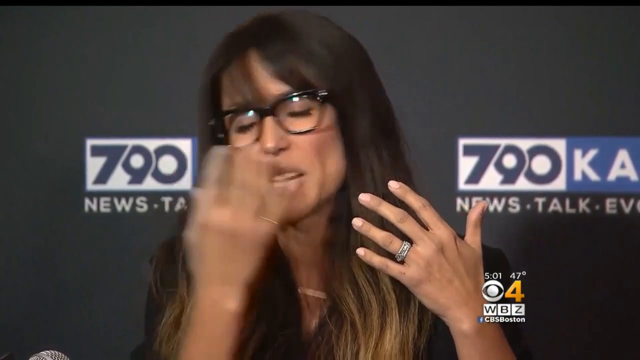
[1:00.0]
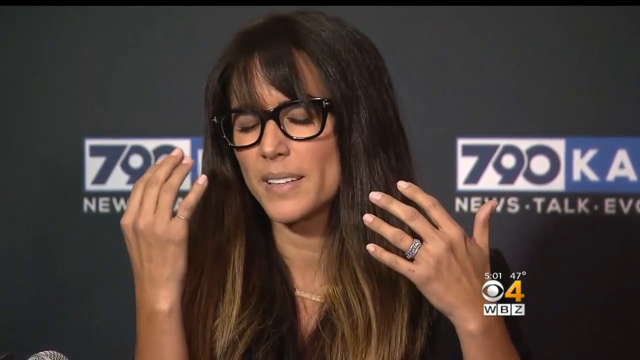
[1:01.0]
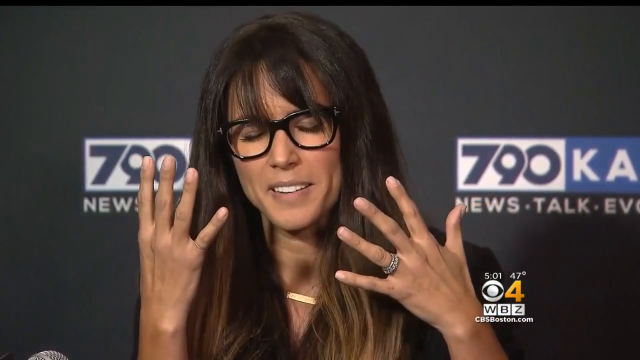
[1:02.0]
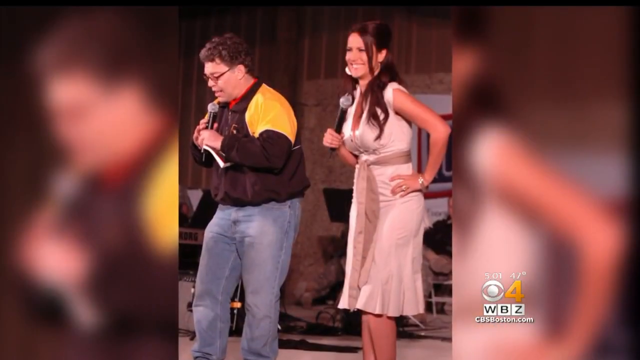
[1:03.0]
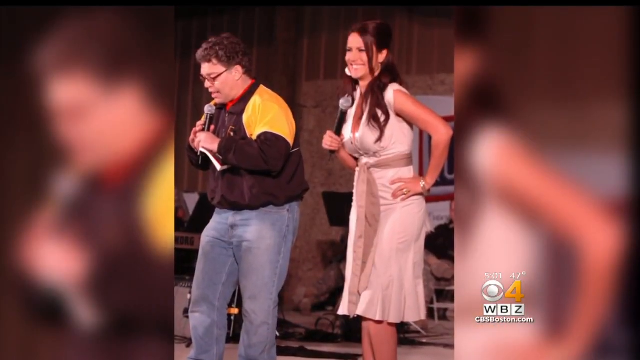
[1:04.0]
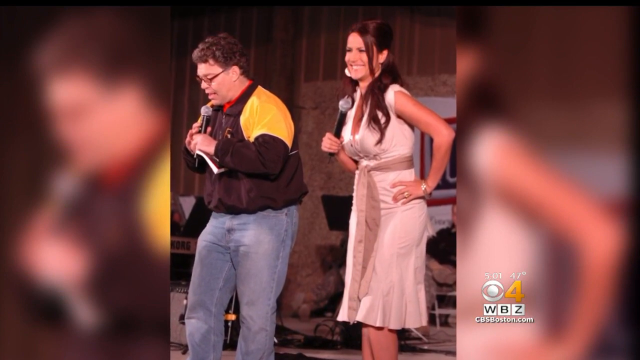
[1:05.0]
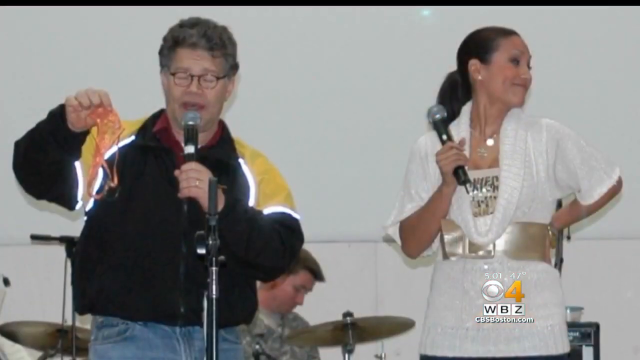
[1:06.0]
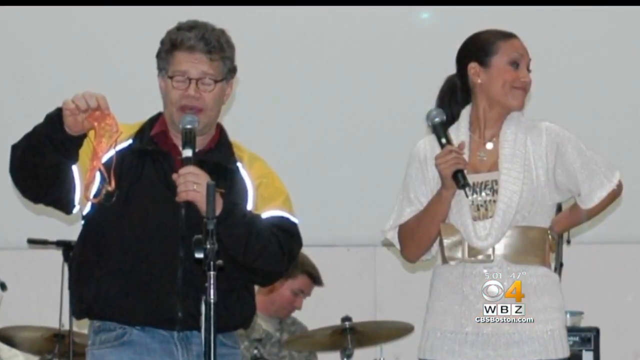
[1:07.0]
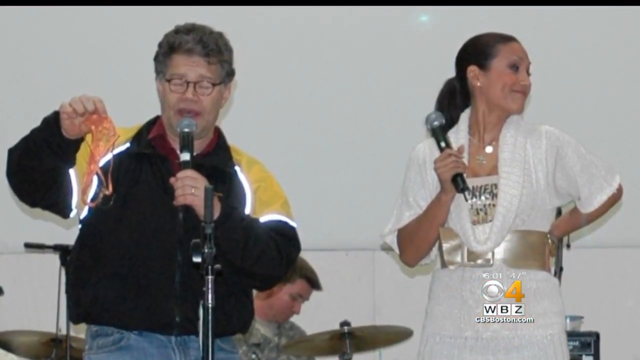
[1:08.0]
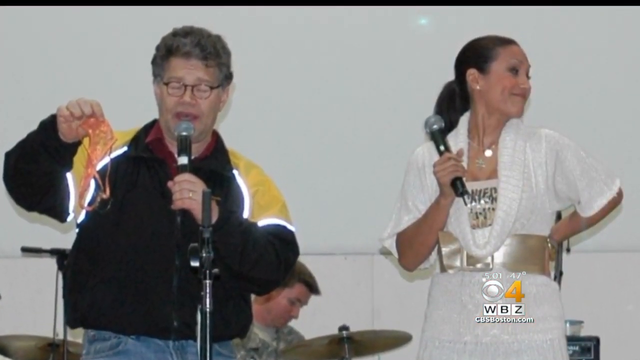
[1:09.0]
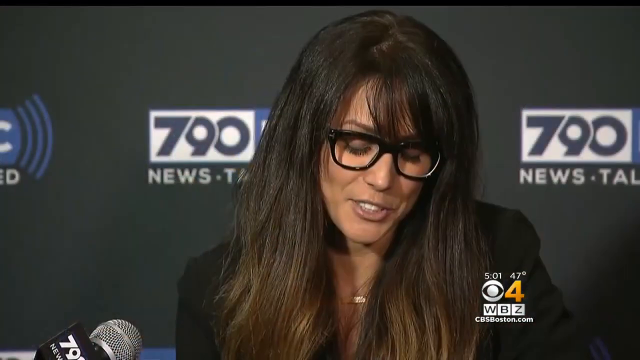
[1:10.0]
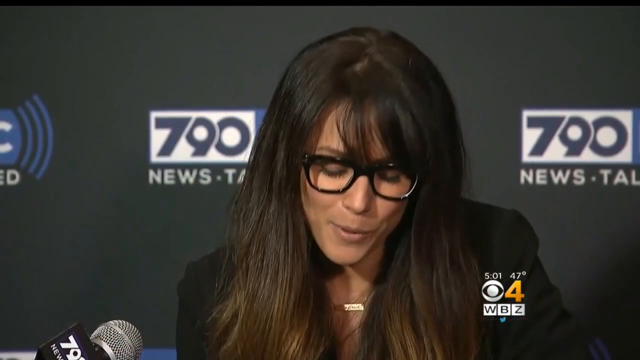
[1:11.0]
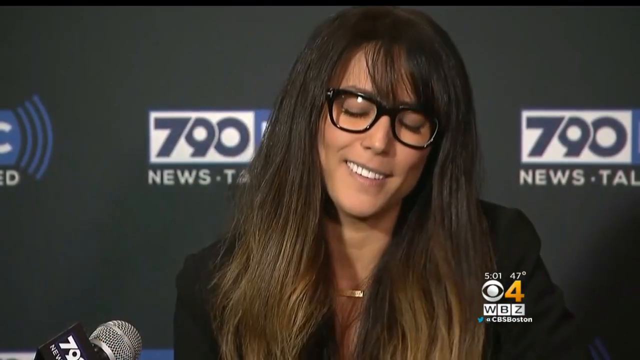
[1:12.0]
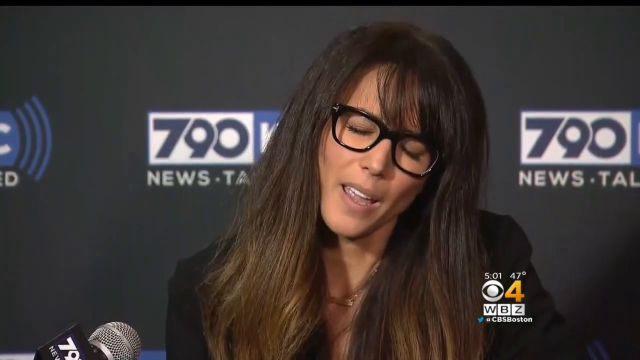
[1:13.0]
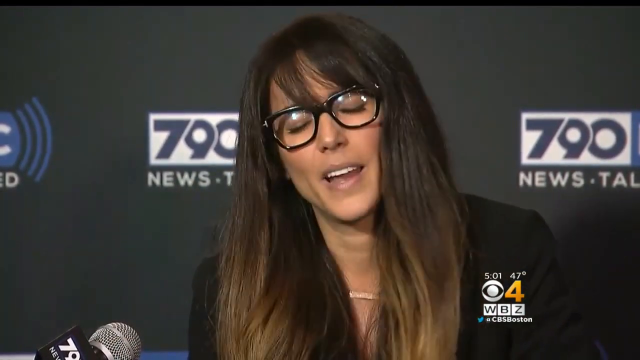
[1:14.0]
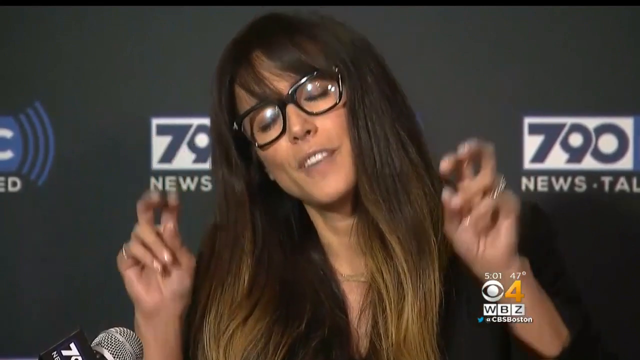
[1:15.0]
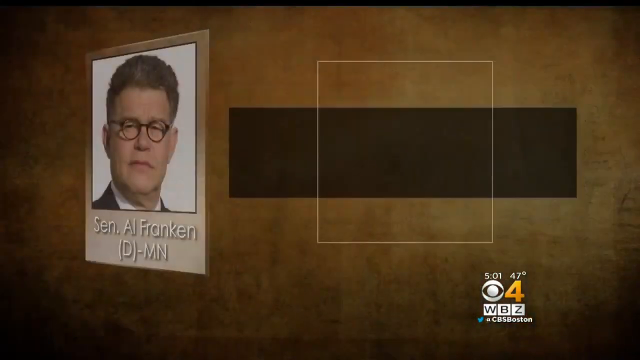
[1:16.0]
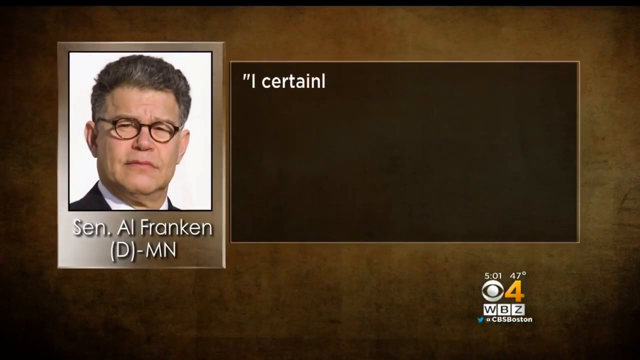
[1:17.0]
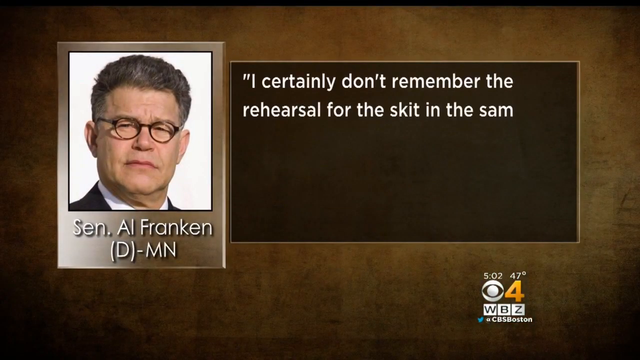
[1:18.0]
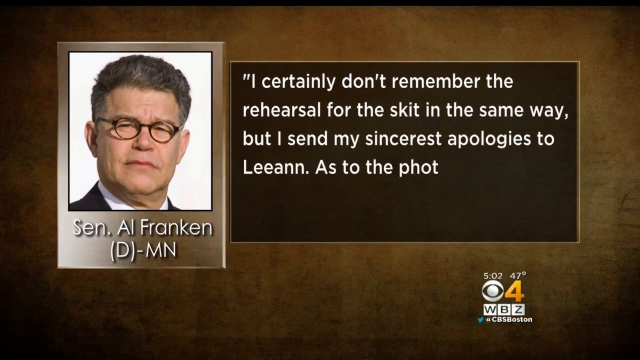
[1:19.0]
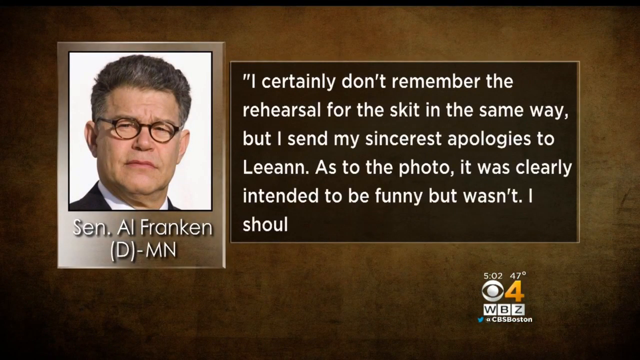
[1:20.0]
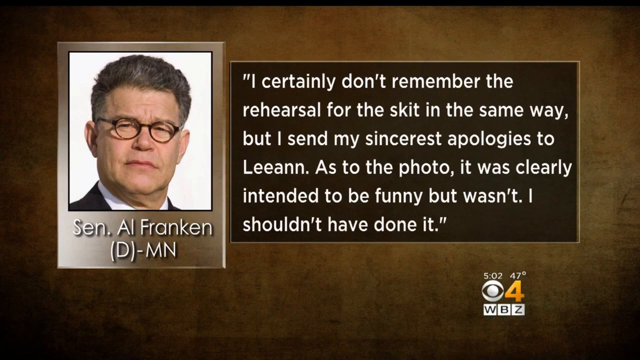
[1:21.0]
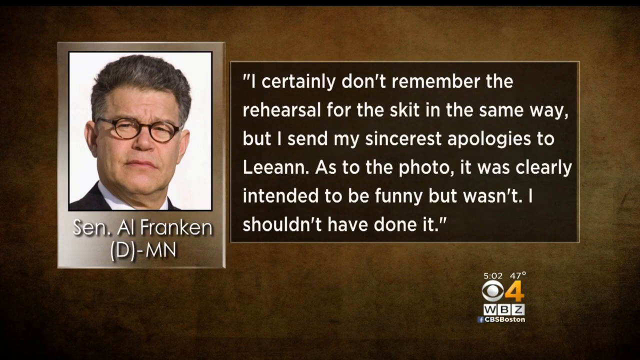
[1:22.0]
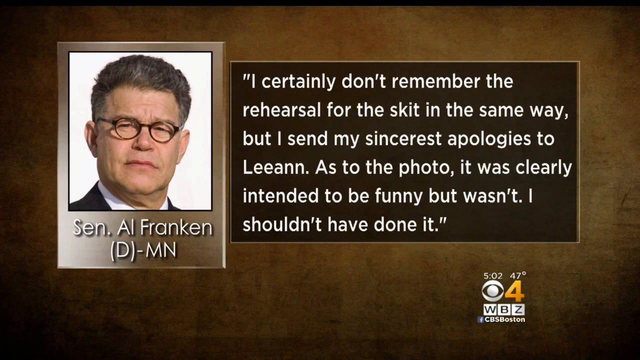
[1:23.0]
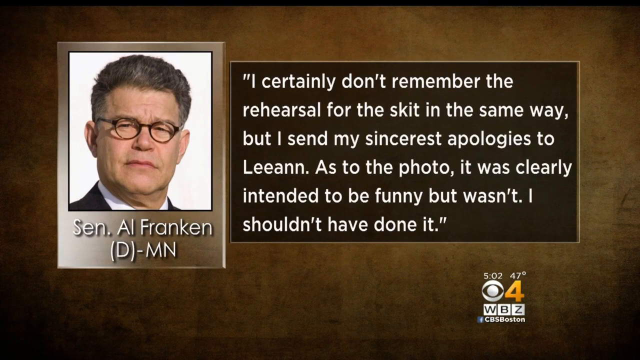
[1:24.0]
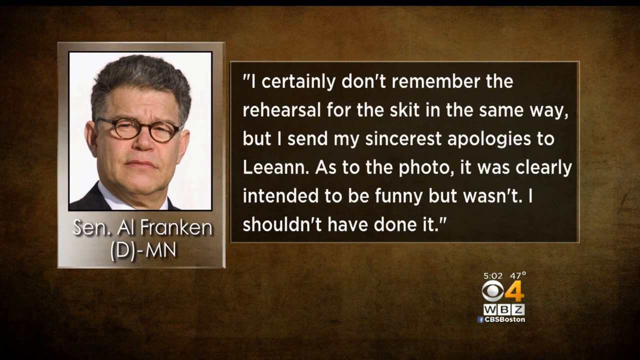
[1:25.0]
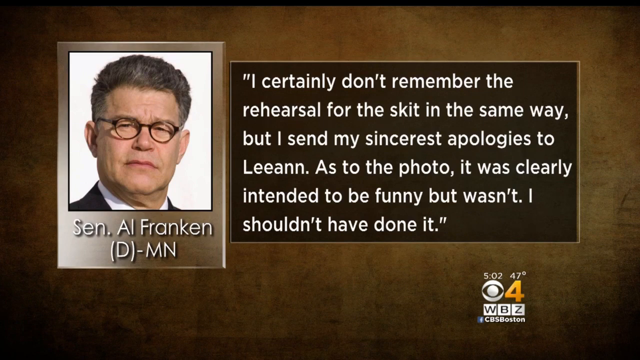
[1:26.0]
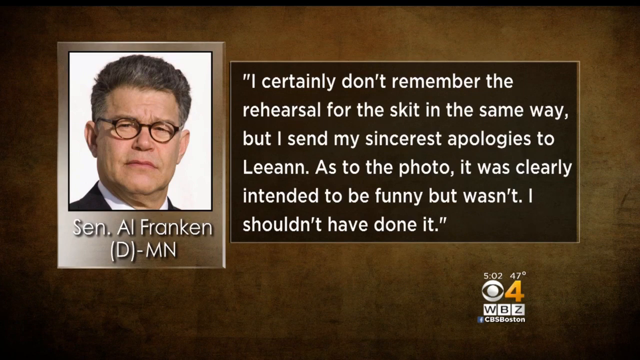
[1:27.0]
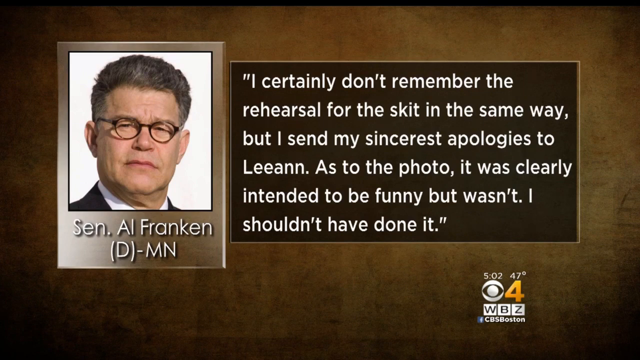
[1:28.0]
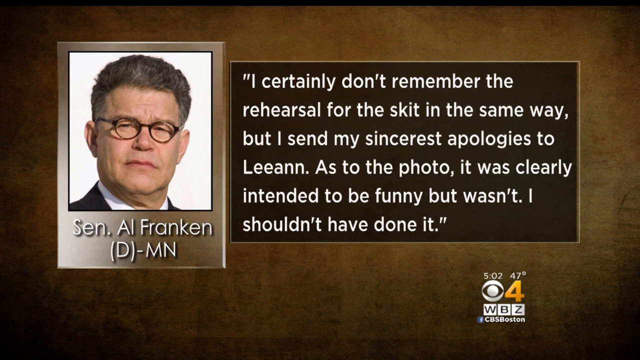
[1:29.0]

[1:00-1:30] Leeann Tweeden continues speaking at the press conference, moving her hands in front of her face, for example her right hand from the left of the screen to the right, and closing her eyes as if remembering something. Two pictures of Al Franken follow. In the first he is on a stage holding a microphone, with a young, beautiful woman by his side also holding a microphone. In the next he again holds a microphone, with another beautiful woman holding a microphone beside him, and he holds up some women's underwear, showing it off to people. The video returns to Leeann Tweeden, who keeps speaking with her eyes closed and makes quotation marks with her hands. It then cuts to a photo of Senator Al Franken with a statement reading: "I certainly don't remember the rehearsal for the skit in the same way, but I send my sincerest apologies to Leeann. As to the photo, it was clearly intended to be funny, but wasn't, I shouldn't have done it."